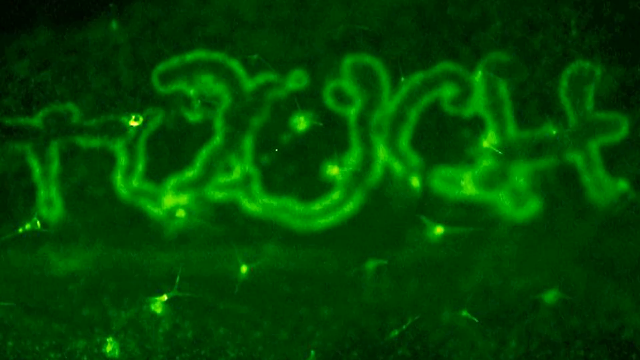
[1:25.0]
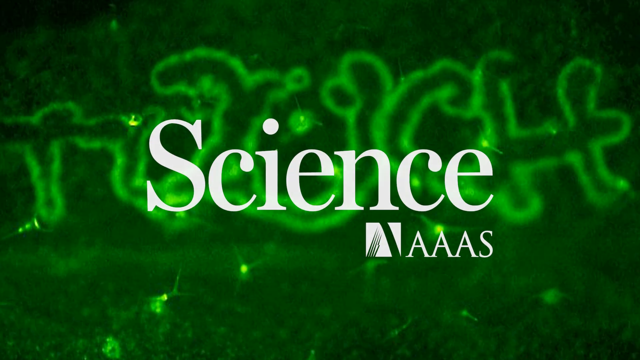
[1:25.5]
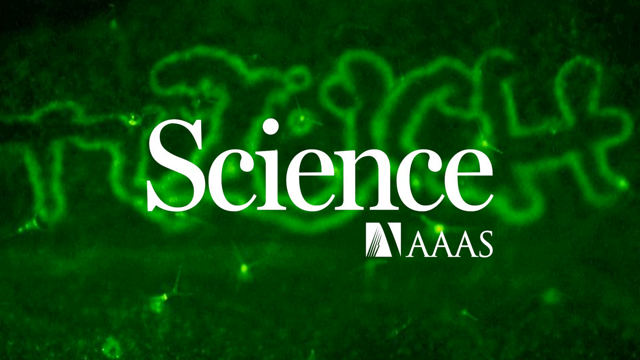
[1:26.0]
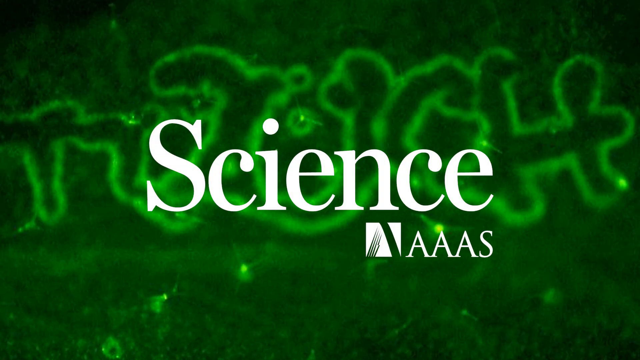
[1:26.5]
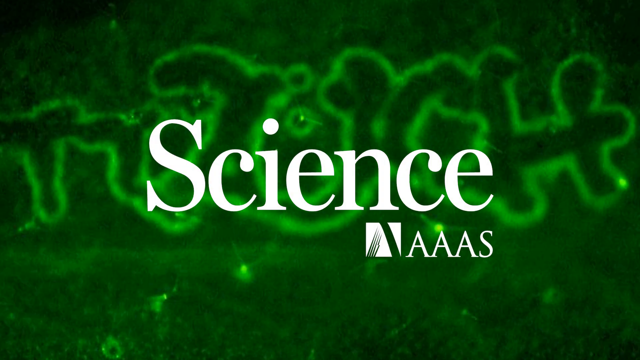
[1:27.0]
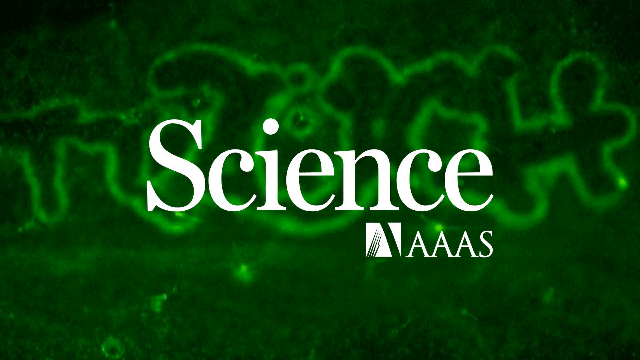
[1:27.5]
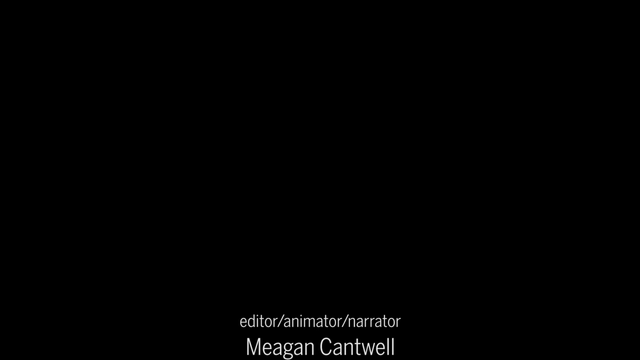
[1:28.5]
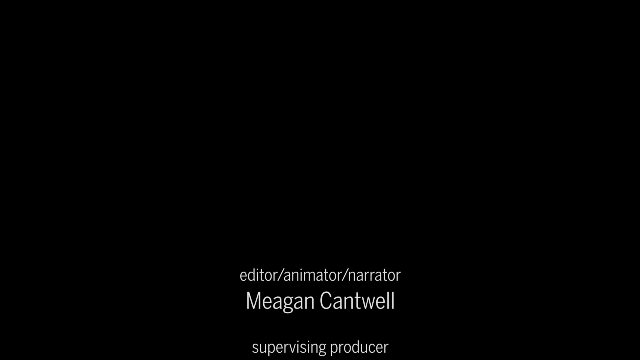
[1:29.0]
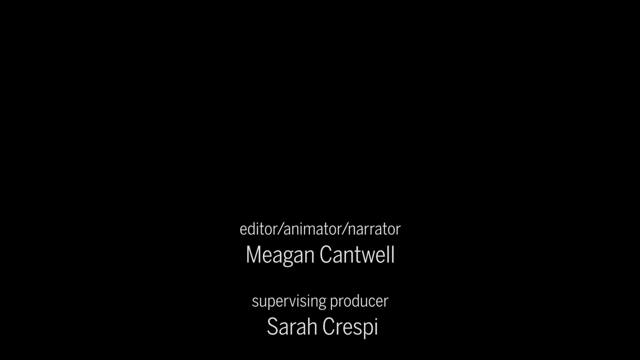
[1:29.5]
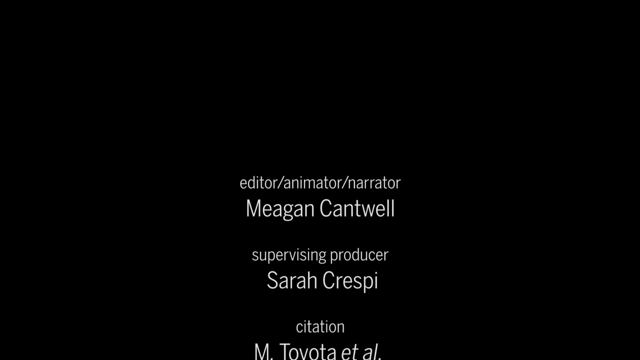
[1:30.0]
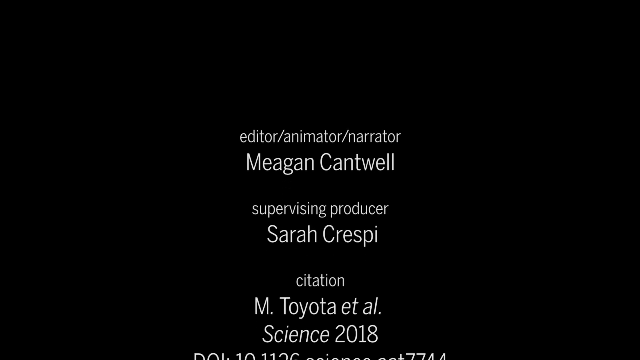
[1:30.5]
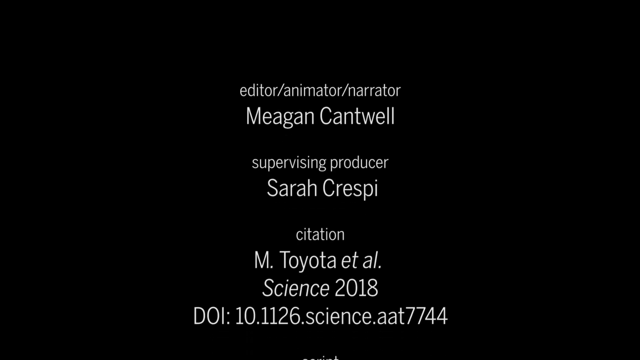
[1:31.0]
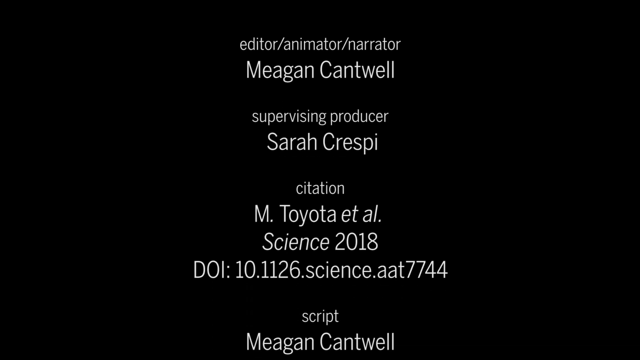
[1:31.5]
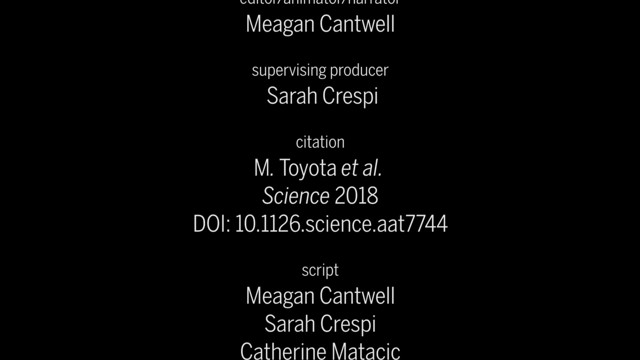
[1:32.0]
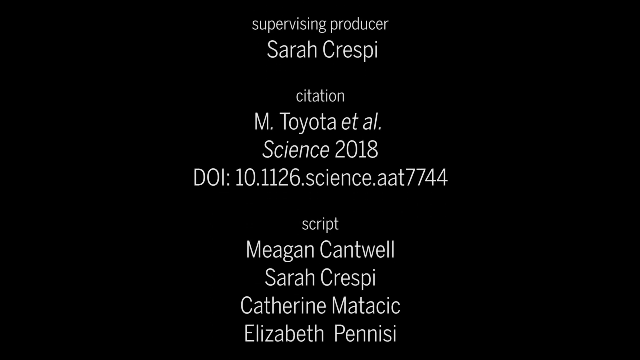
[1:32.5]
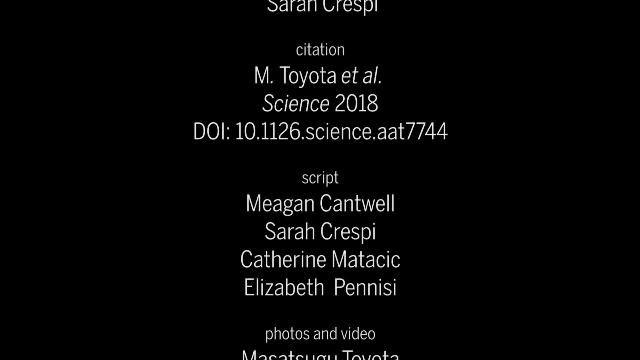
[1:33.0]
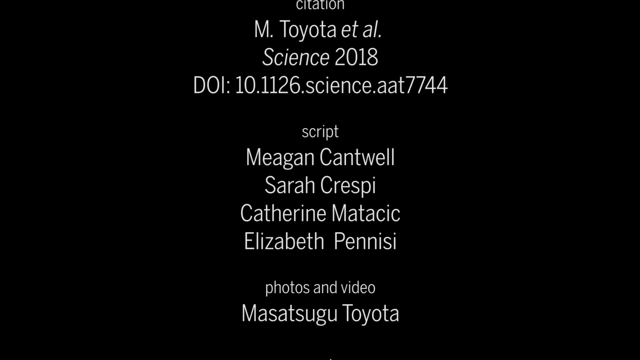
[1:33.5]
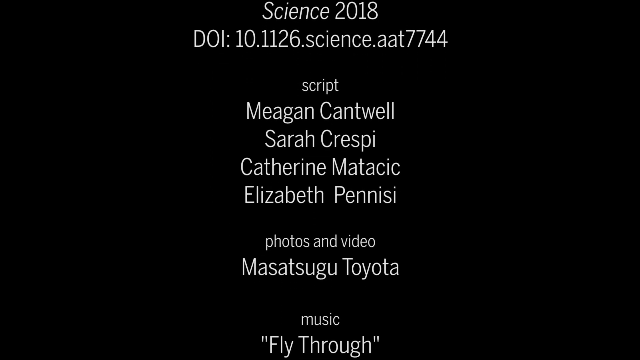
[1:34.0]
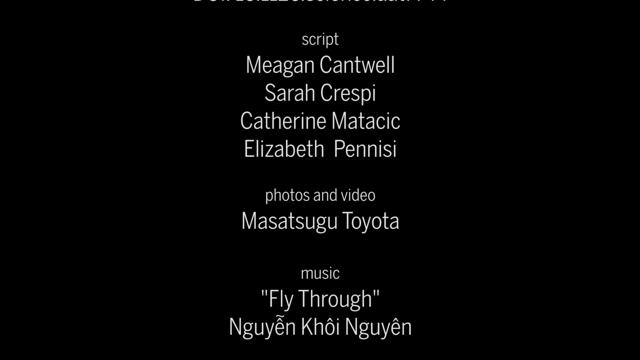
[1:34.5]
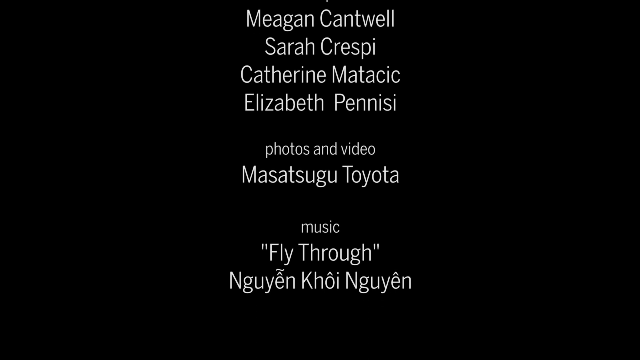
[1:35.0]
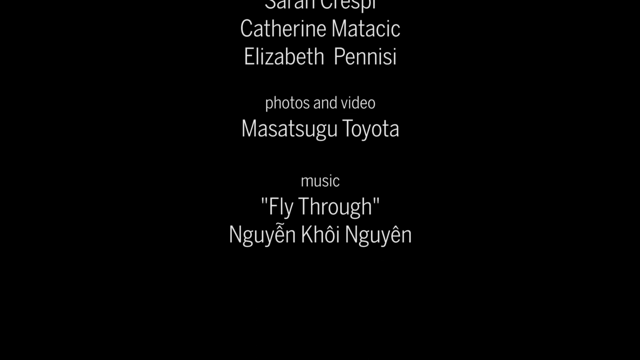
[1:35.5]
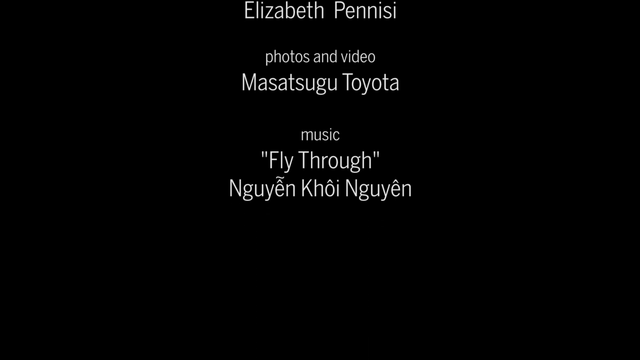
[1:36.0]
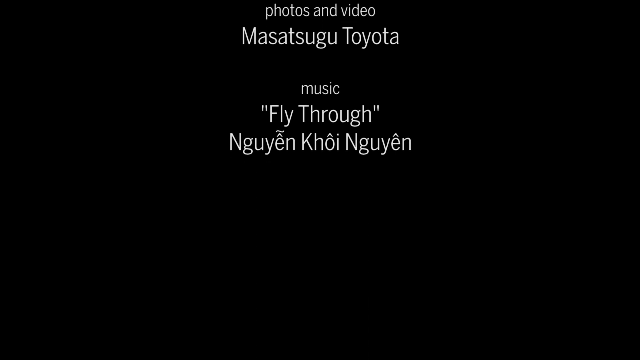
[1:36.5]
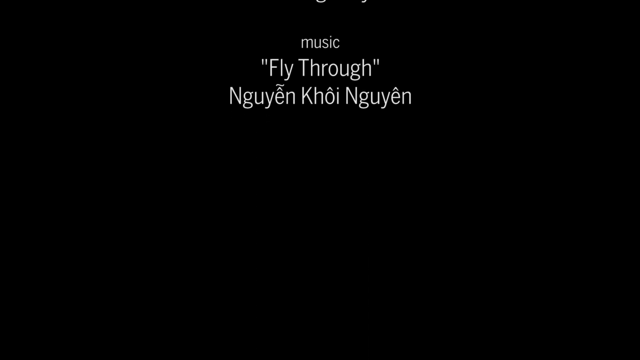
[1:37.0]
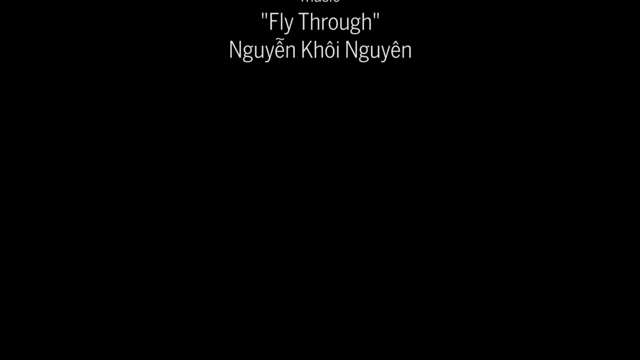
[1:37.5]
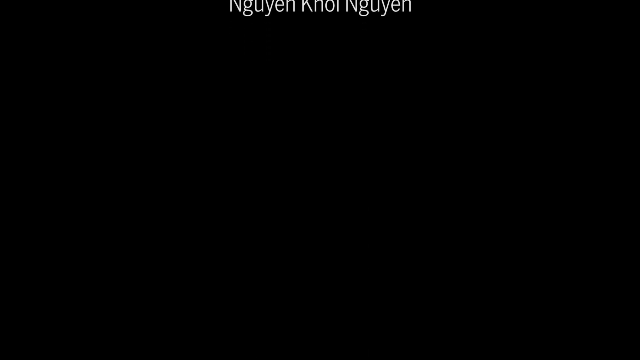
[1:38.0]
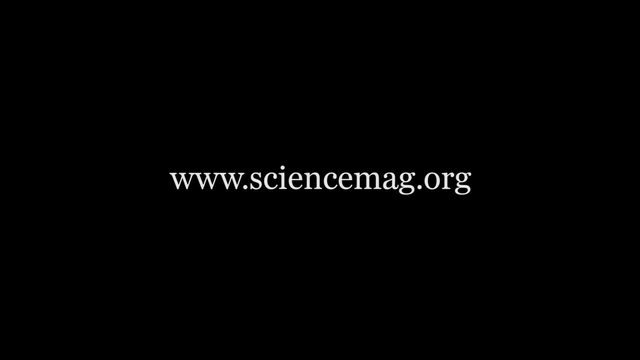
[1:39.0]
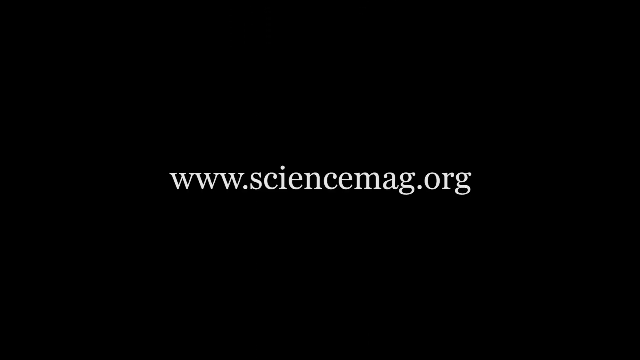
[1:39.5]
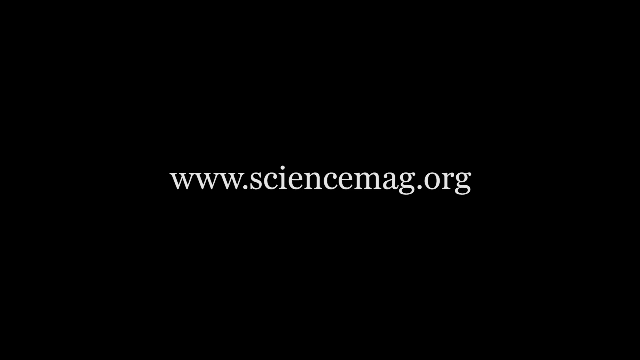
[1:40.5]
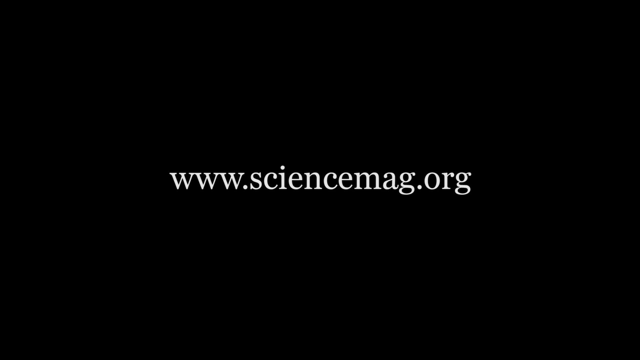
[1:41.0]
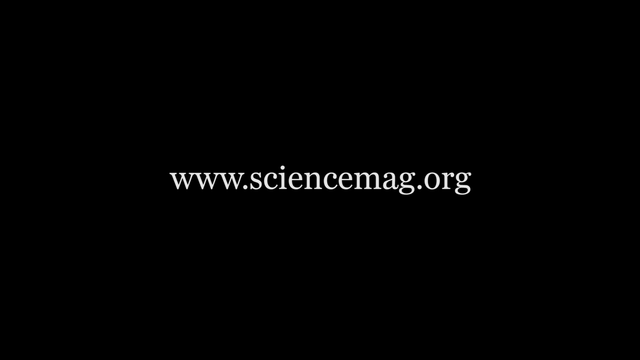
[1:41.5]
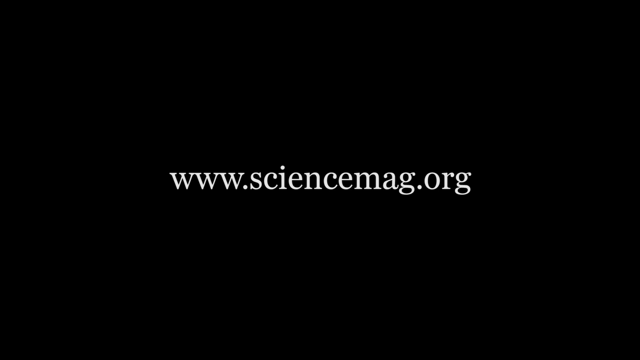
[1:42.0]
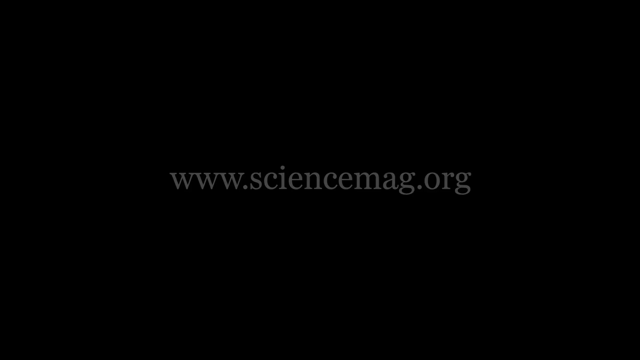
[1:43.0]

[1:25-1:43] The ending credits begin with the Science Magazine logo superimposed on one of the images of the plant under high magnification. Then simple white text on a black background scrolls upward. Most of the video seems to have been produced by Megan Cantwell and Sarah Crespi, with Katherine Matysik and Elizabeth Penisi also contributing. The video finishes by displaying the Science Magazine URL, www.sciencemag.org.